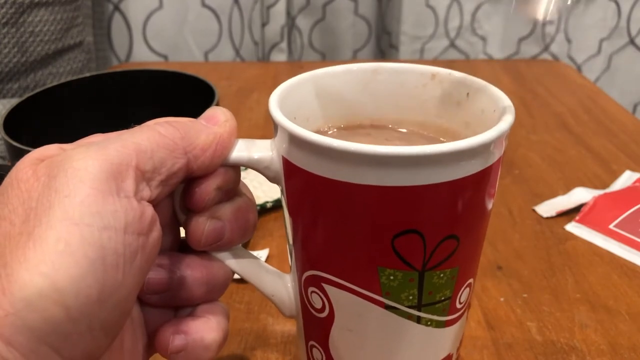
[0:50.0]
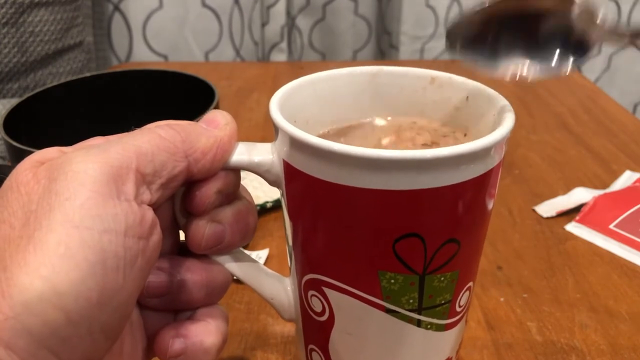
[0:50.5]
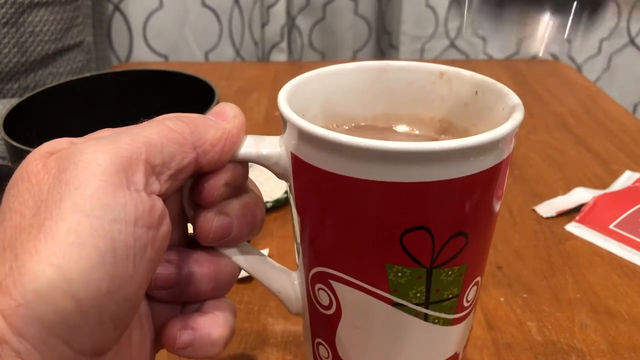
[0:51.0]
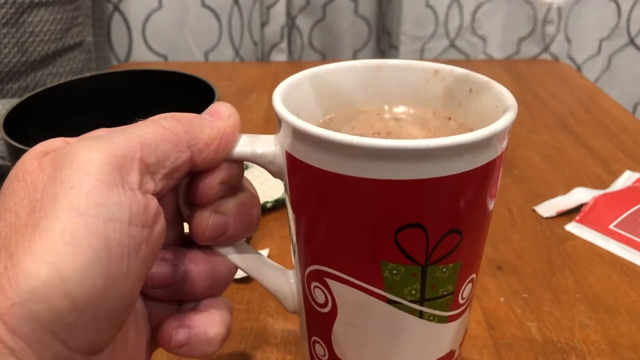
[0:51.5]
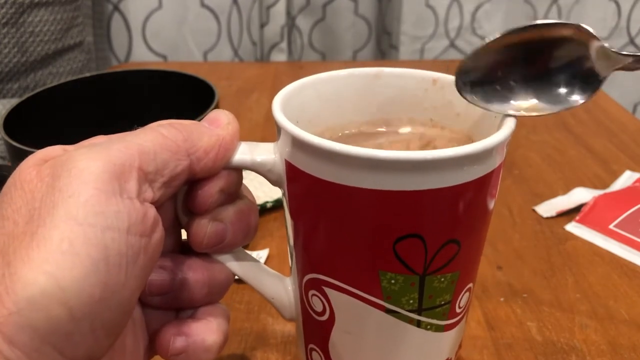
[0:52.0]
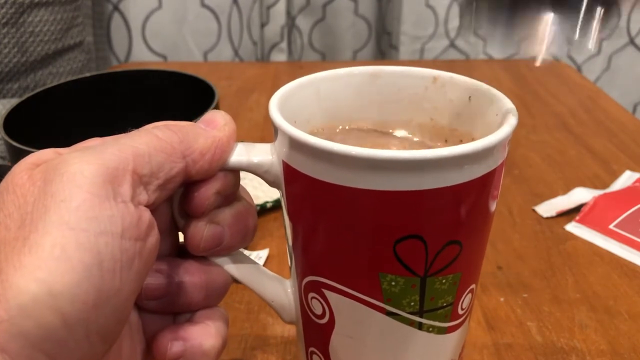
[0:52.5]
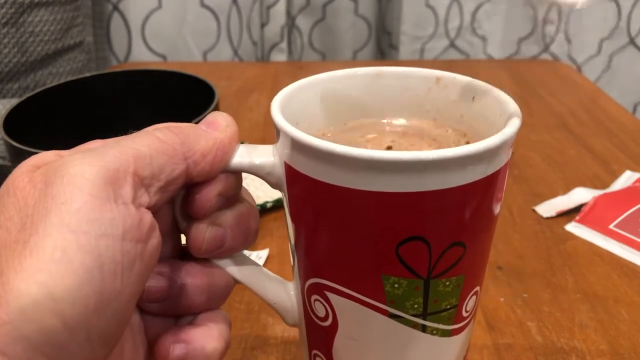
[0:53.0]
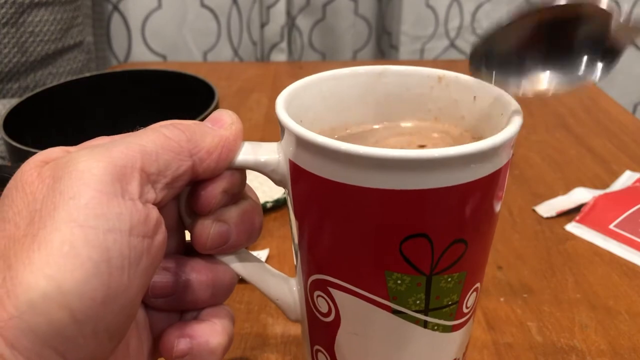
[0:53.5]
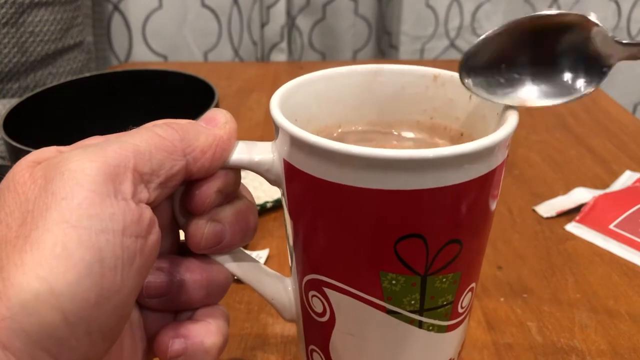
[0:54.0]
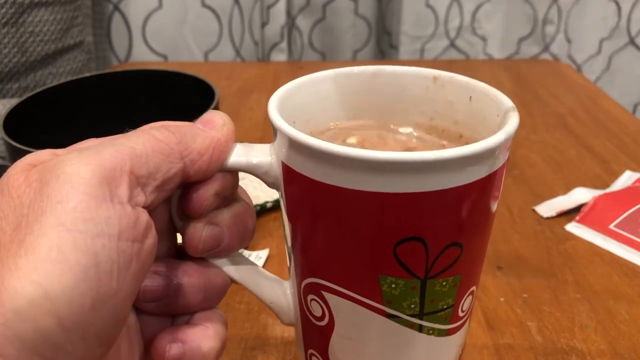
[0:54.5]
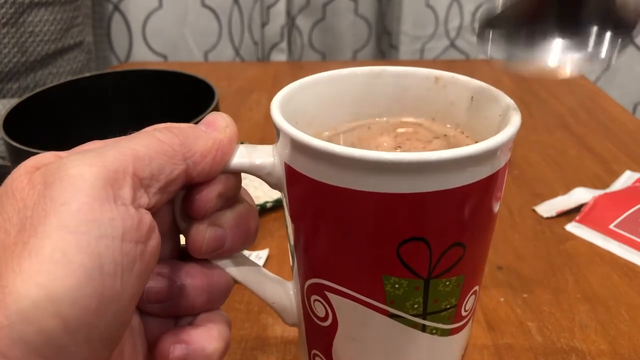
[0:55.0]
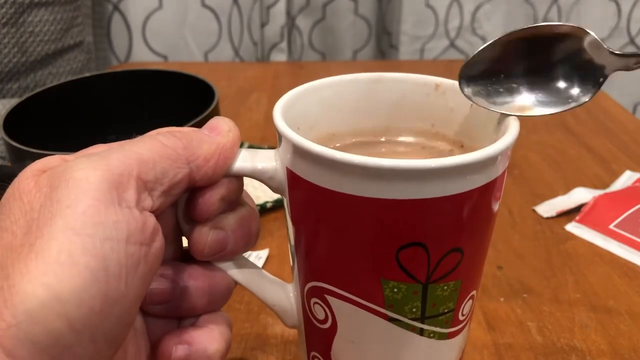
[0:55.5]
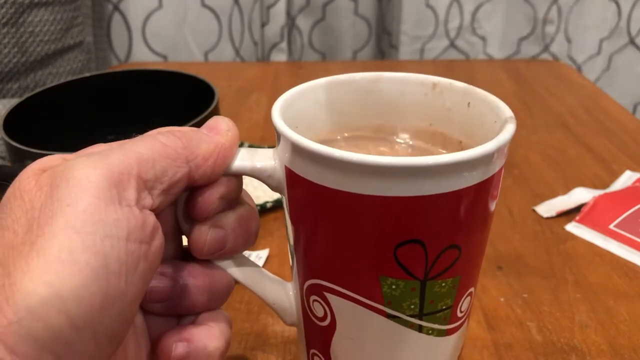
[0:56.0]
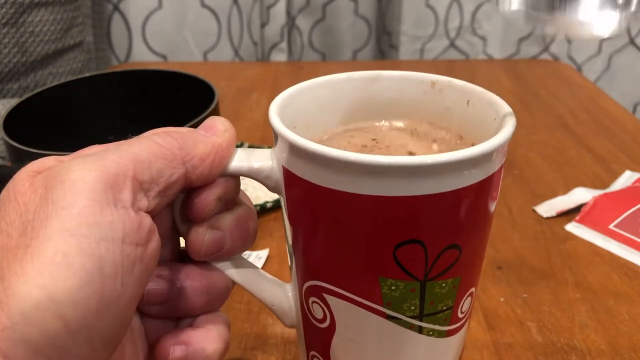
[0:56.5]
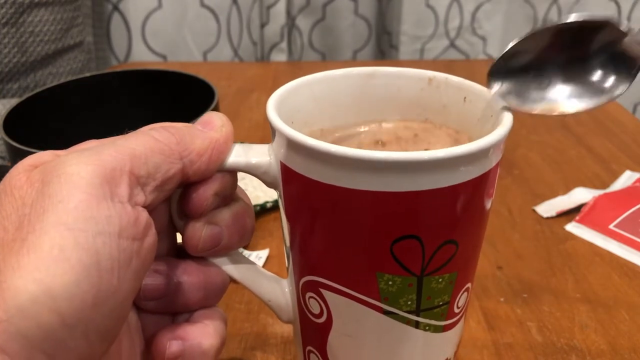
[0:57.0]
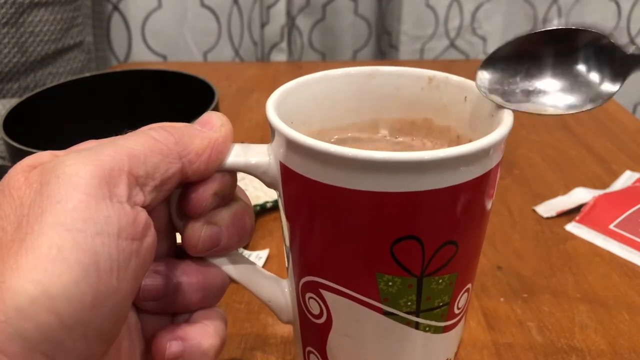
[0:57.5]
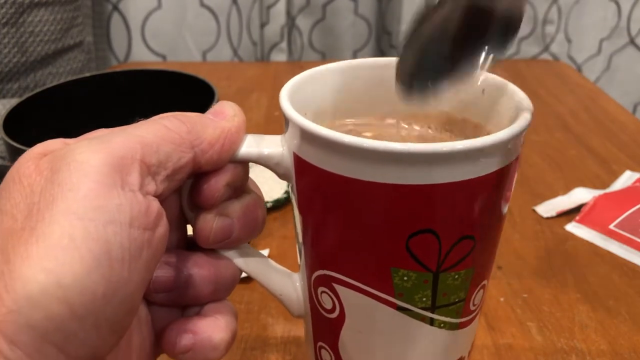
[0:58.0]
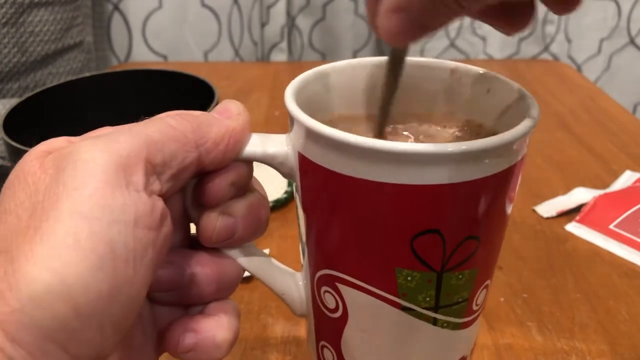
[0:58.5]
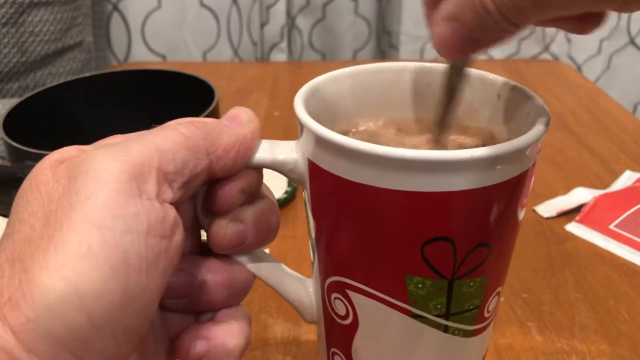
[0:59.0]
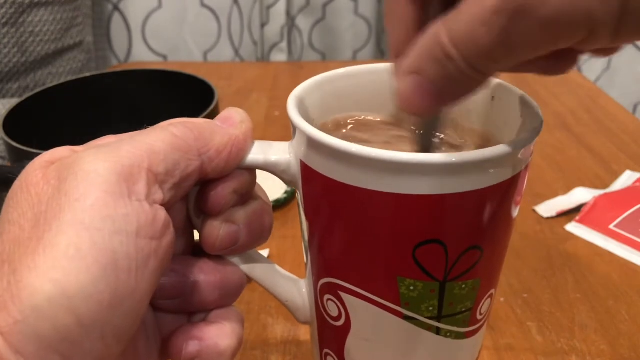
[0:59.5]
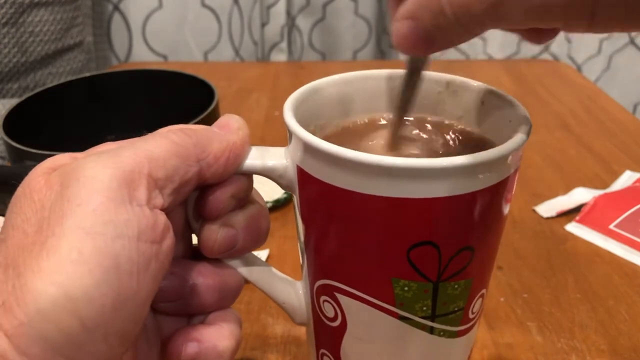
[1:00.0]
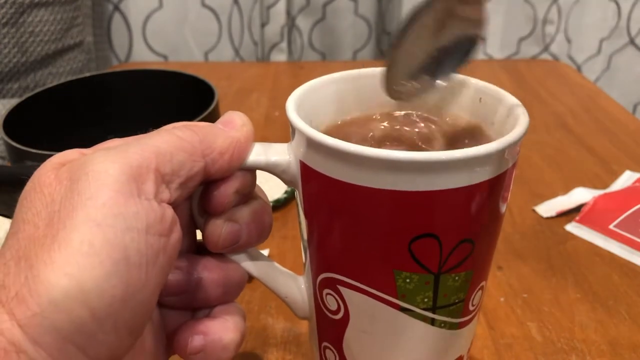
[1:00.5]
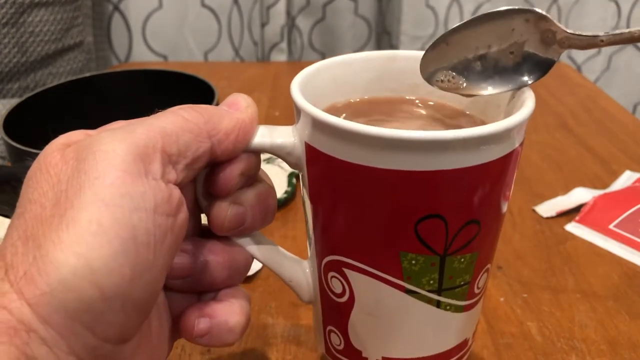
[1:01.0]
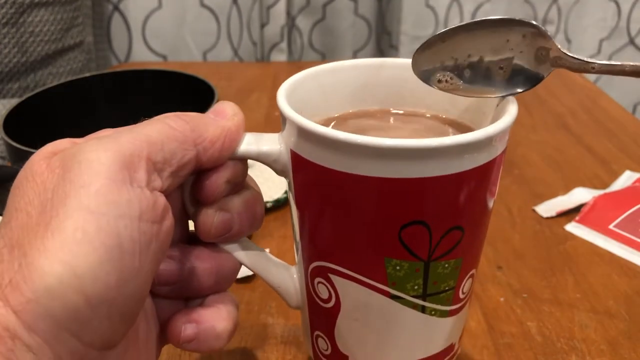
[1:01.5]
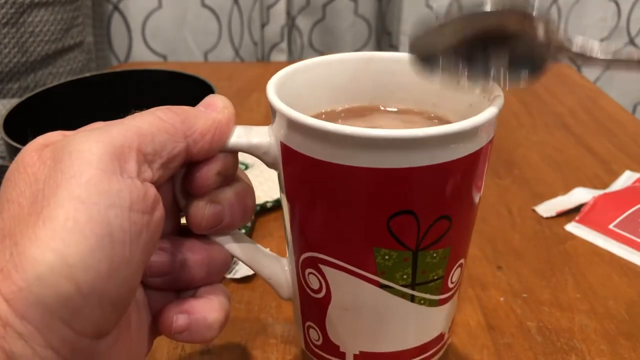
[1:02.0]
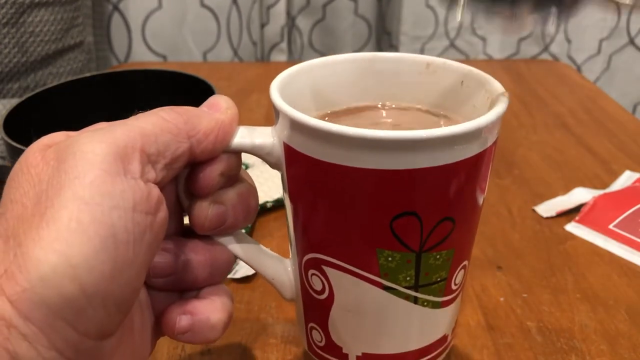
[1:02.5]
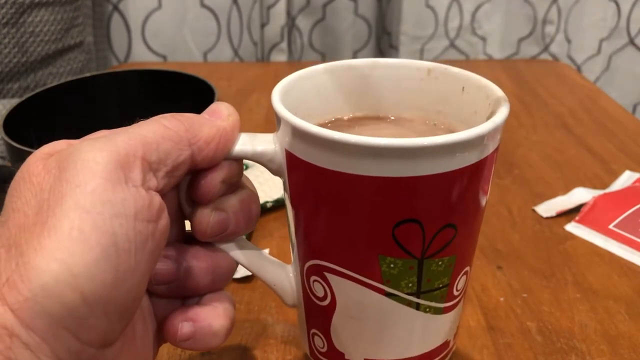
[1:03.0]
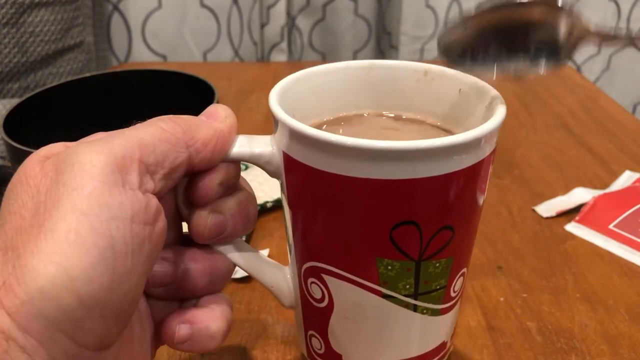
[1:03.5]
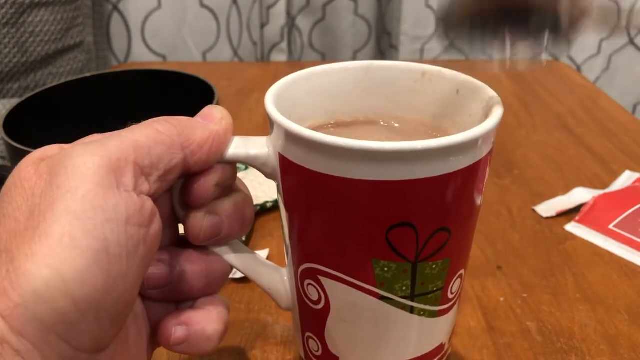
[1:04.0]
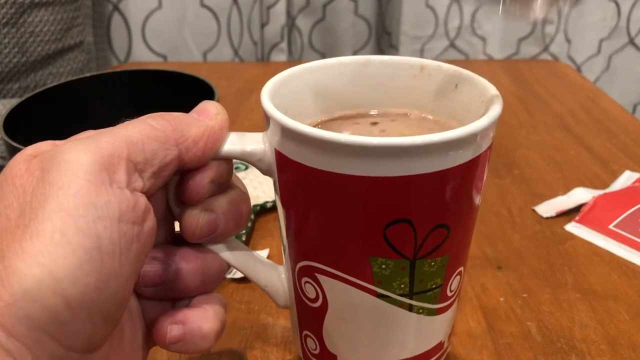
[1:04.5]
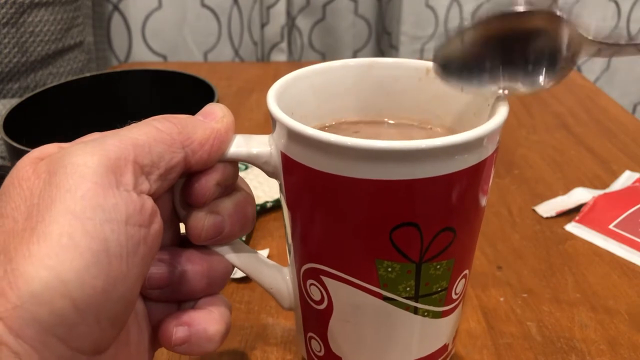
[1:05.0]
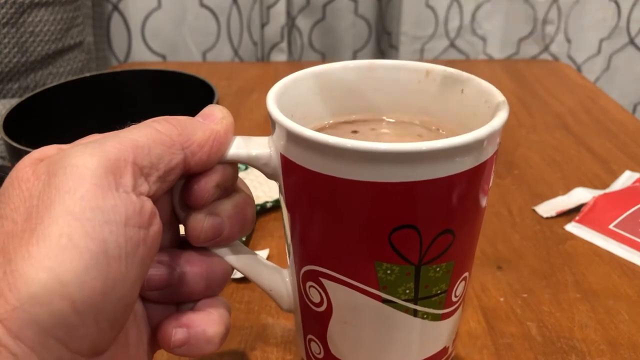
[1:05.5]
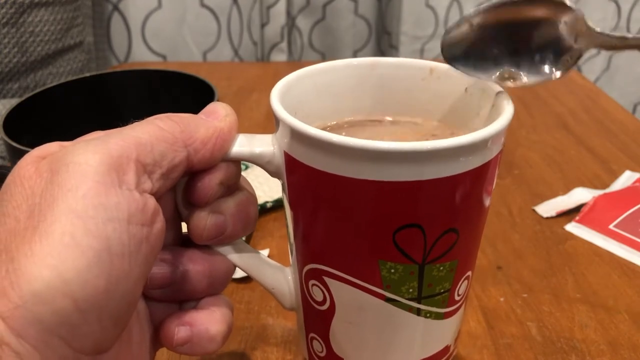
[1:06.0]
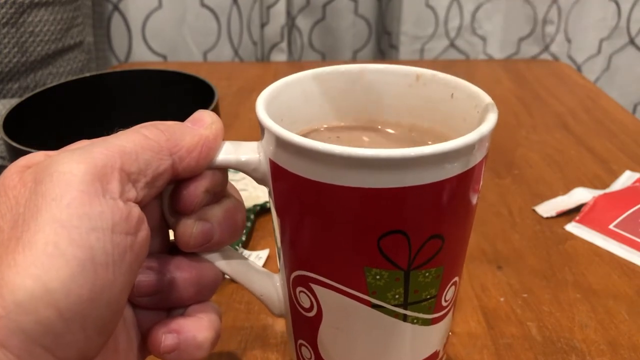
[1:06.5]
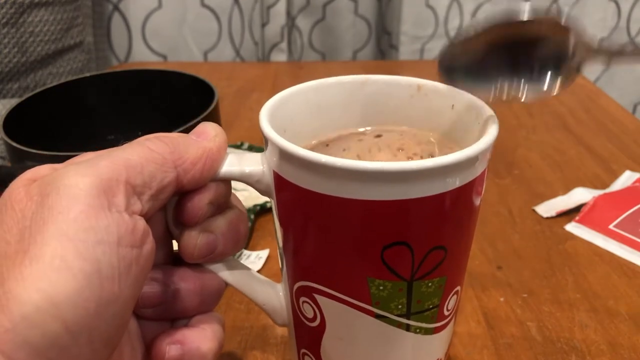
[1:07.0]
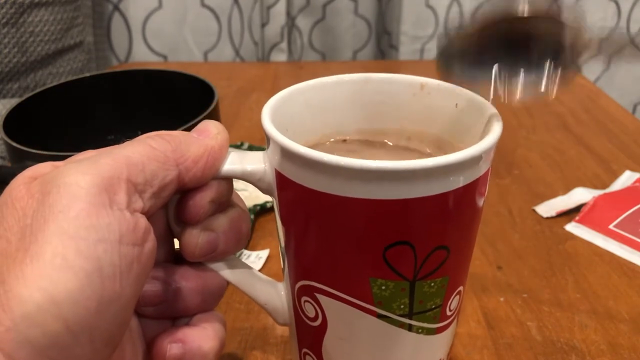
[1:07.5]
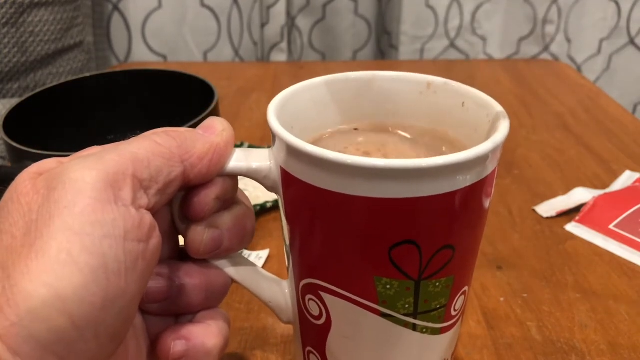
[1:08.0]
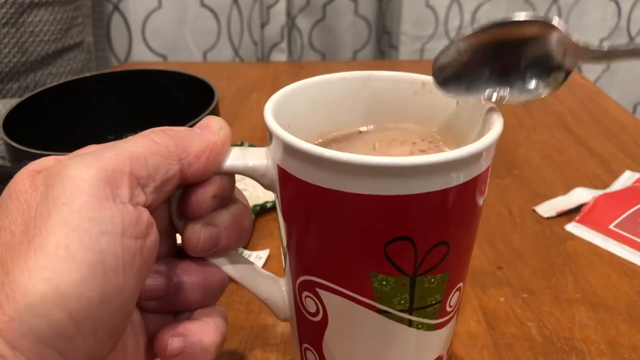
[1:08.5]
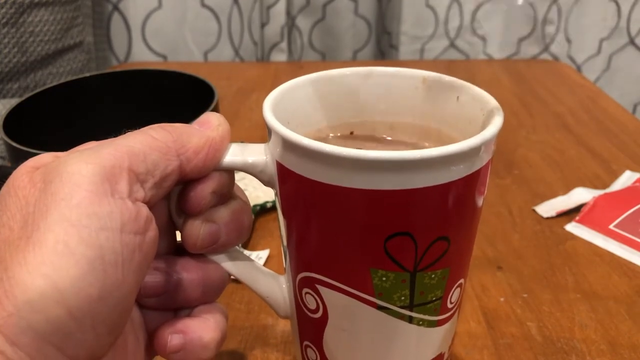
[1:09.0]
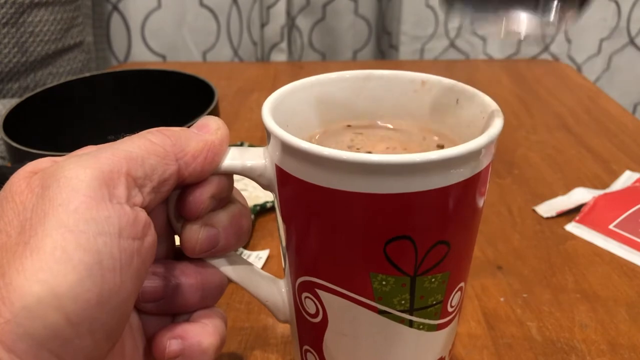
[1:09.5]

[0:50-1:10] The person continues tapping somewhat forcefully and repeatedly on the rim of the cup with the edge of the spoon. They stir the hot chocolate again, then hold up the spoon and tap it repeatedly, somewhat forcefully, taking care not to spill or move the cup with any swift, sharp motions, before going back to hitting the rim with the edge of the spoon. The cup looks like a white porcelain cup or mug with a red banner of sorts, and in a sort of 60s retro style it shows a simplified shape of a sleigh carrying a green package.